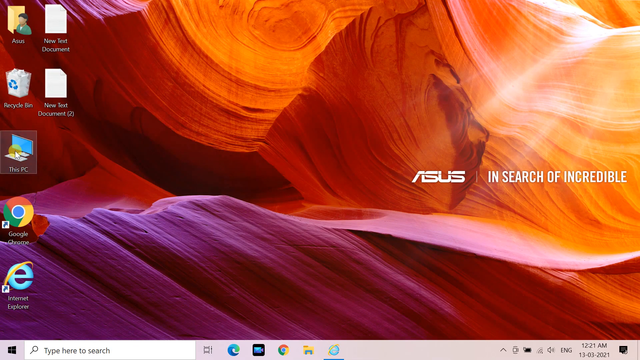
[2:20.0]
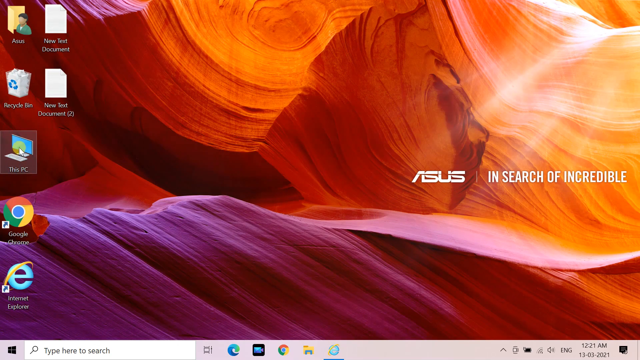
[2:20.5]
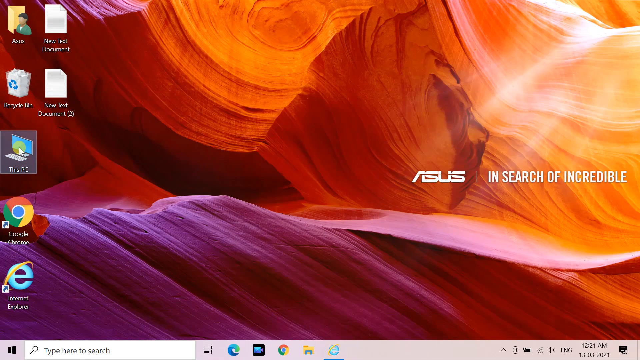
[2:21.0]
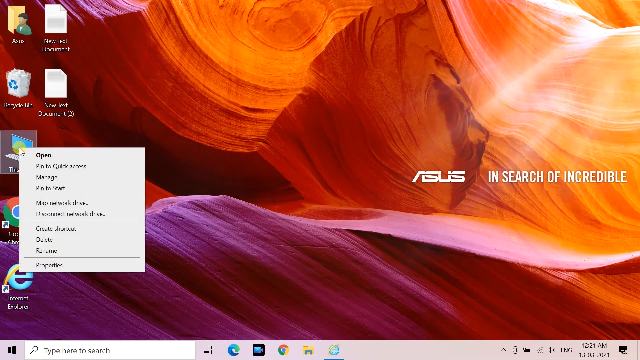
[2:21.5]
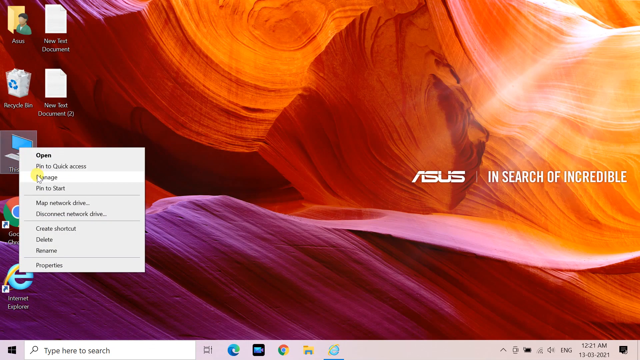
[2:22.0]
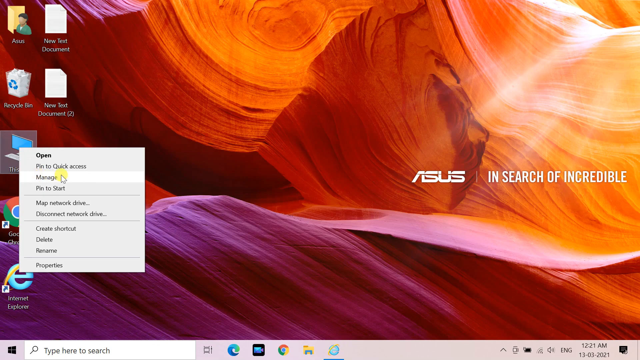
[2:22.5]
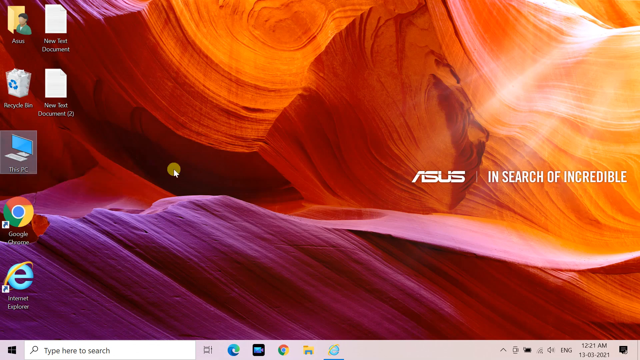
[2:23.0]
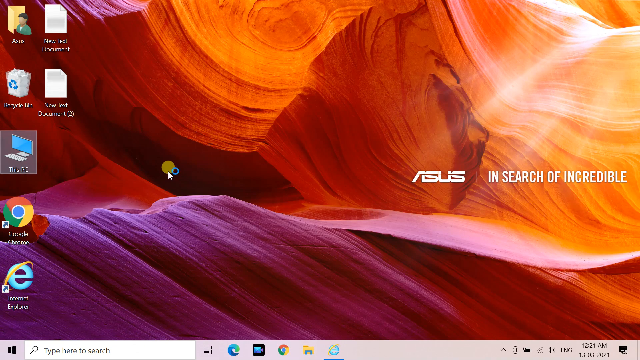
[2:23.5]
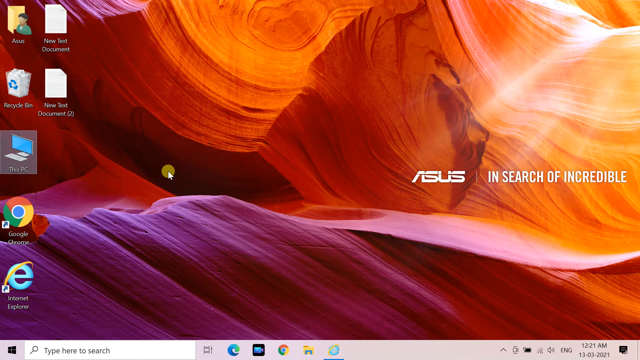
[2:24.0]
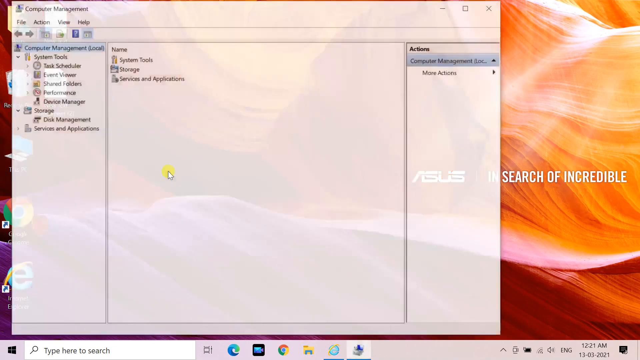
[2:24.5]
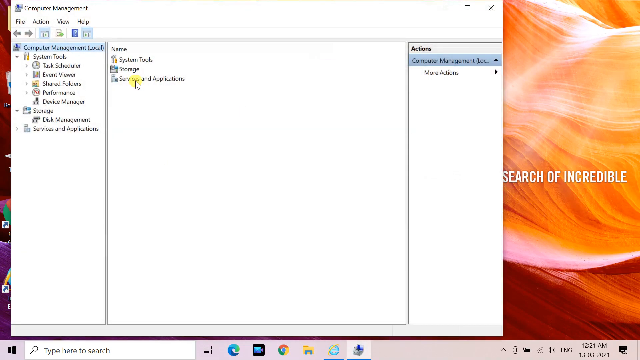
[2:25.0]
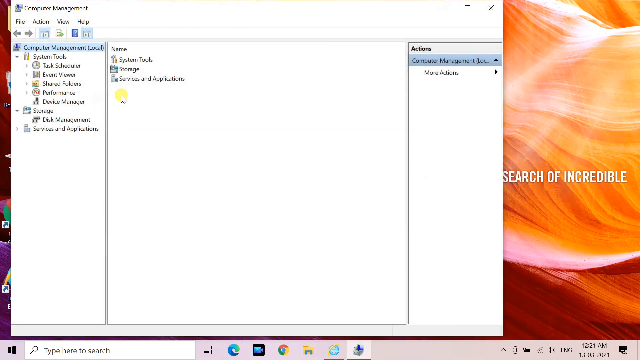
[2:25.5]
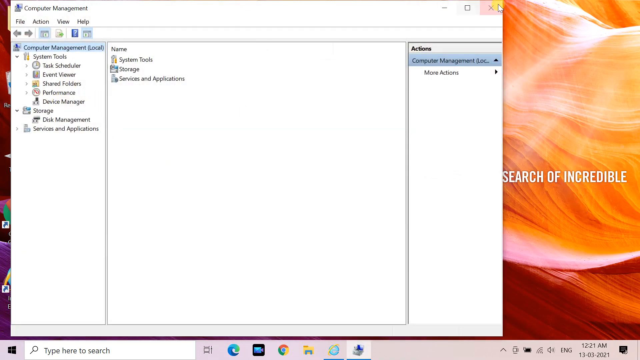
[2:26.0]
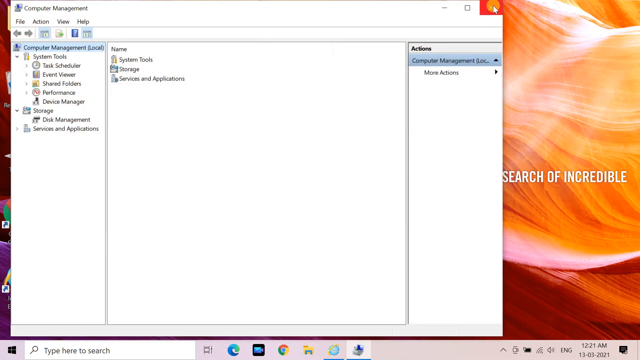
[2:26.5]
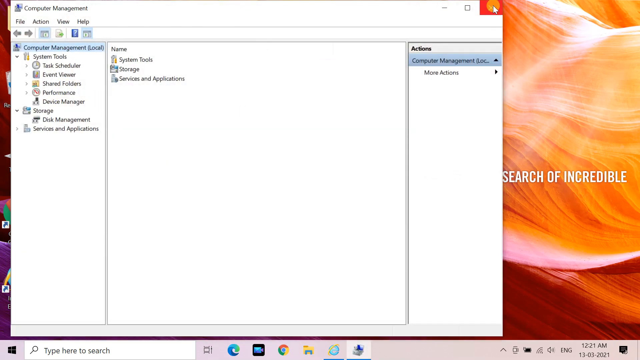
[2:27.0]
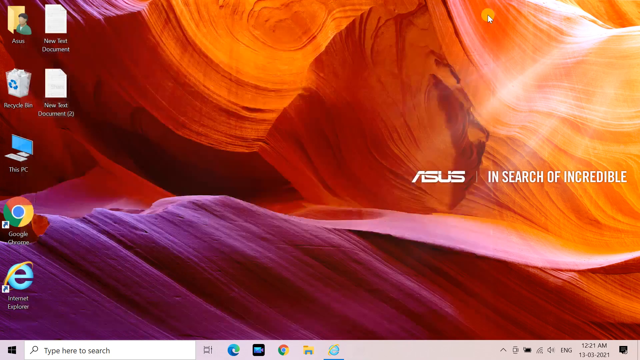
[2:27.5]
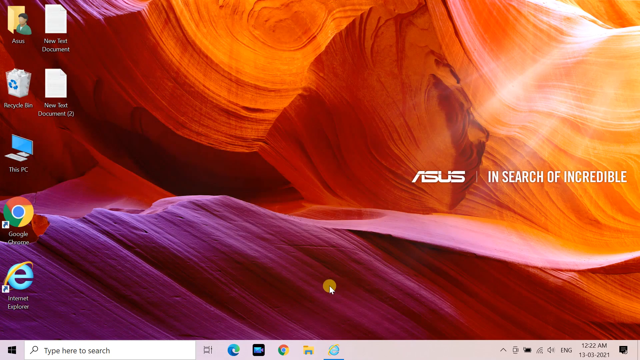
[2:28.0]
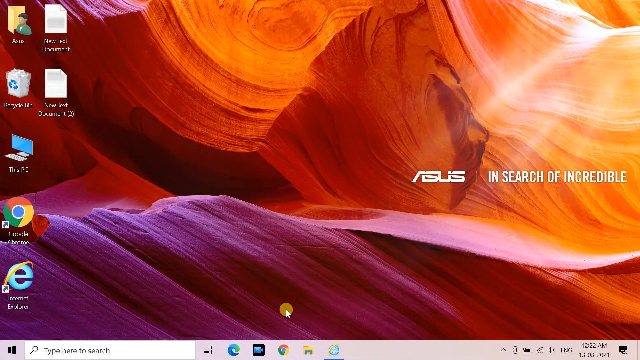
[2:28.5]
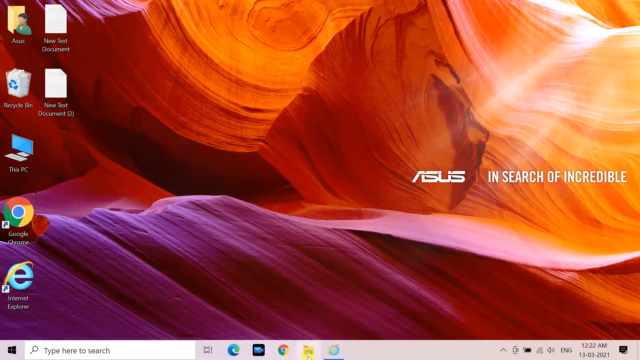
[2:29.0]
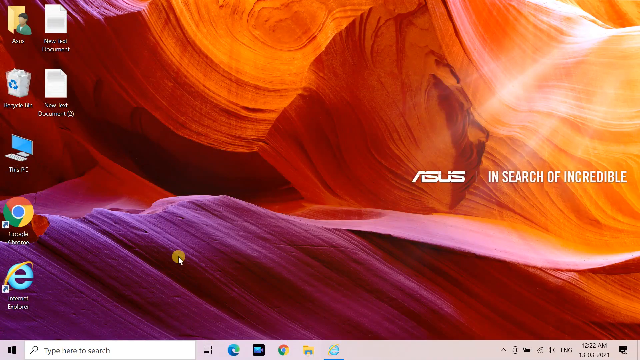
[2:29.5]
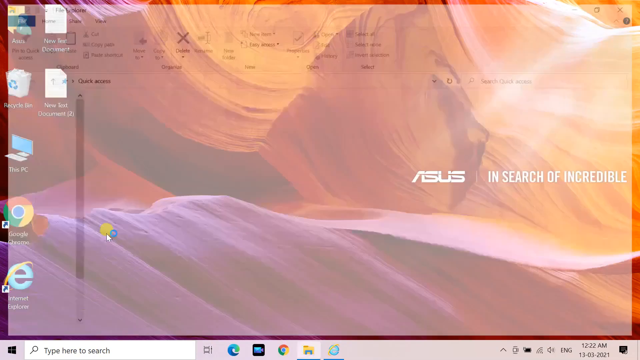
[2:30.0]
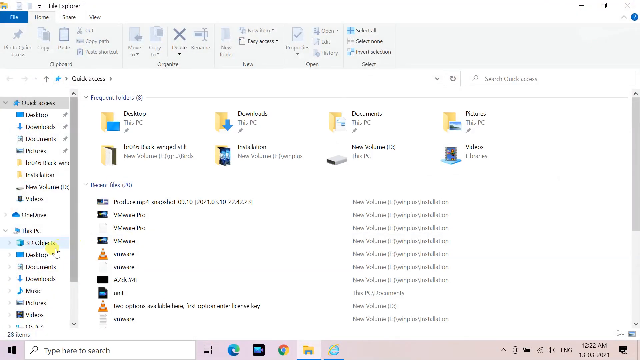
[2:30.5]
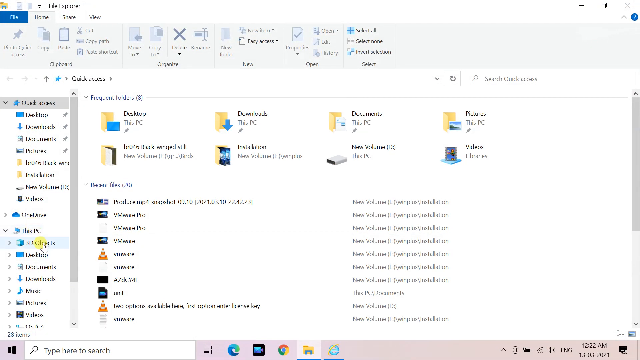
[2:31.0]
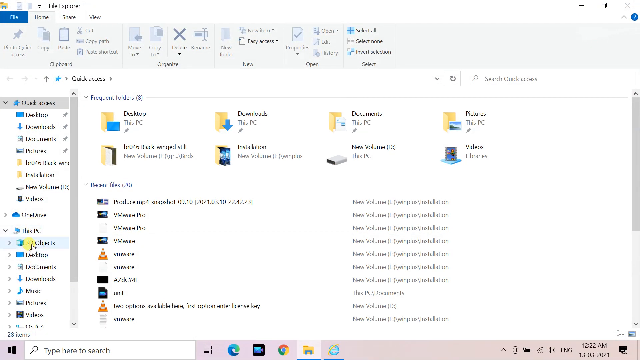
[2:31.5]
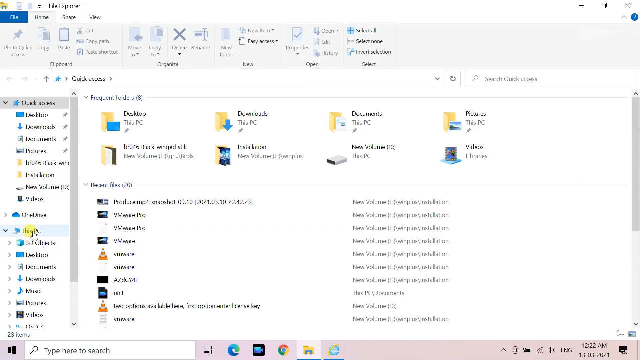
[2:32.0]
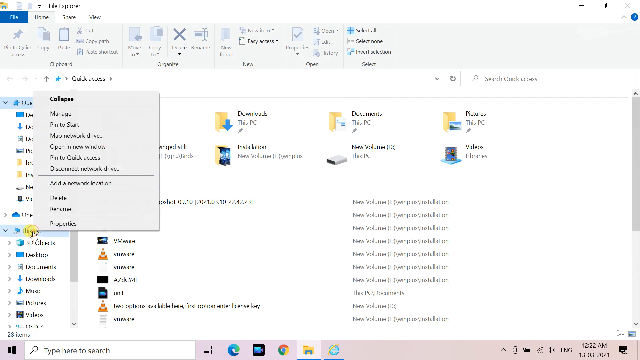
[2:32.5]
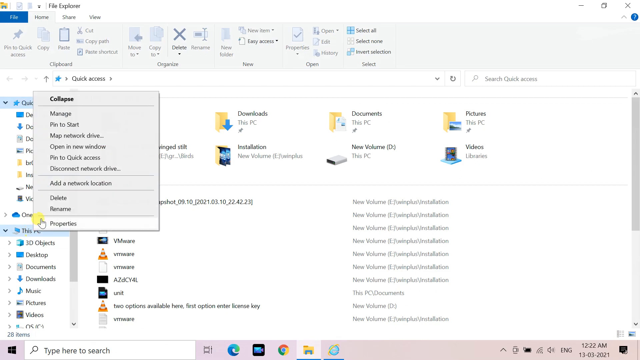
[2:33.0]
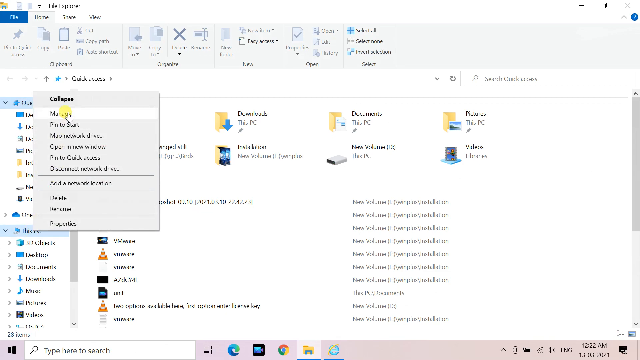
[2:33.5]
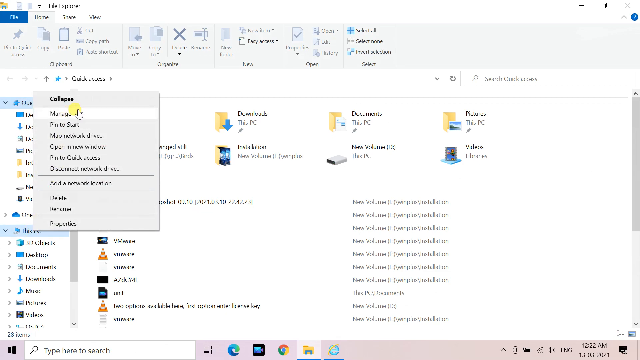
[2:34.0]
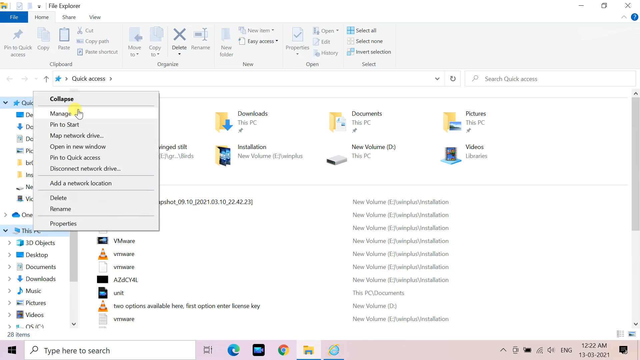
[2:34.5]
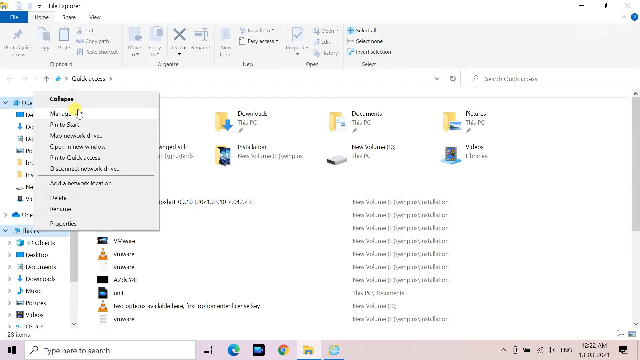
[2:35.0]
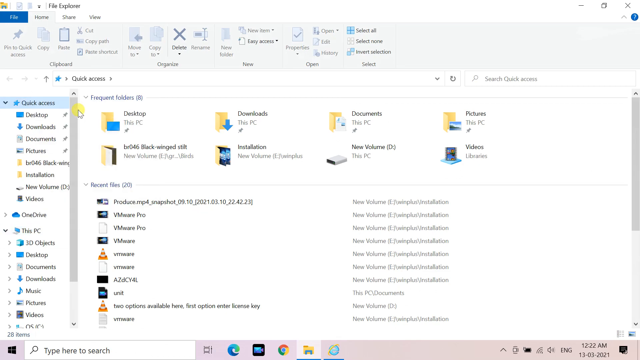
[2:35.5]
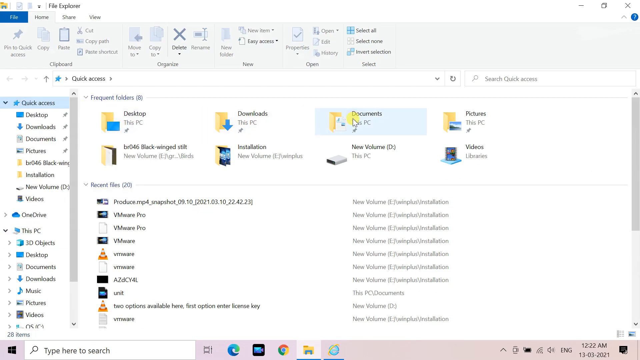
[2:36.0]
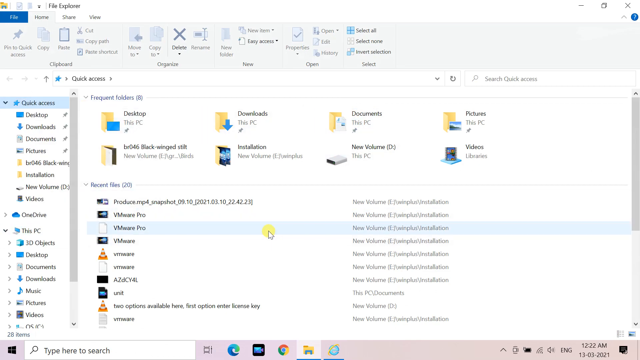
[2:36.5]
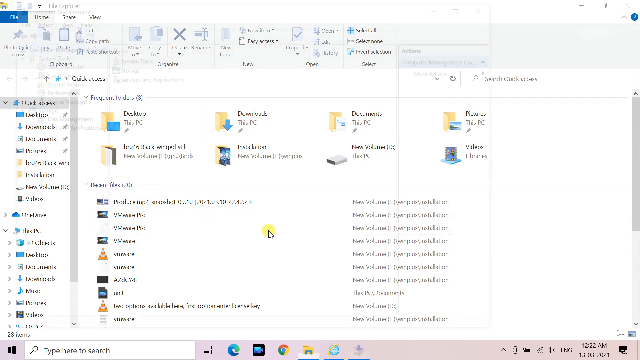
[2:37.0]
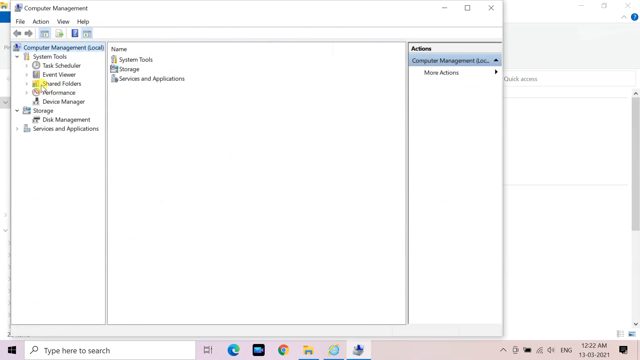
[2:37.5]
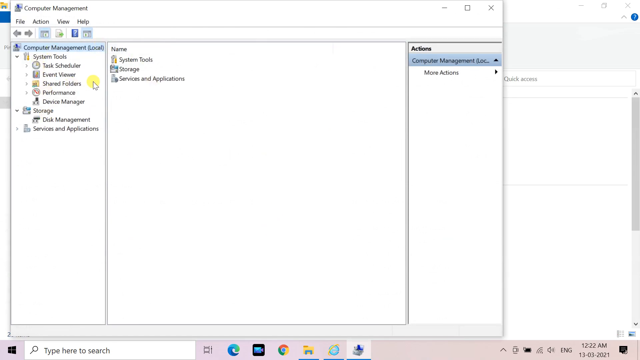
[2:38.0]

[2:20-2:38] The user clicks on this PC and hits Manage again, and a window with different files opens. They close it, reopen their documents, go again to this PC, and hit Manage again, and the files pop up again. It seems the user is showing ways to find and access these files on the PC other than through a shortcut on the desktop. The screen still shows the computer background with "ASUS" and "in search of incredible."